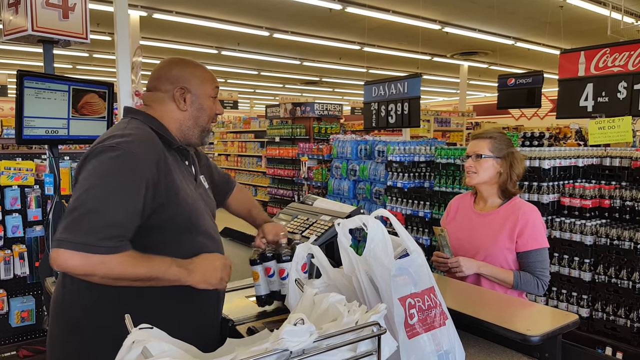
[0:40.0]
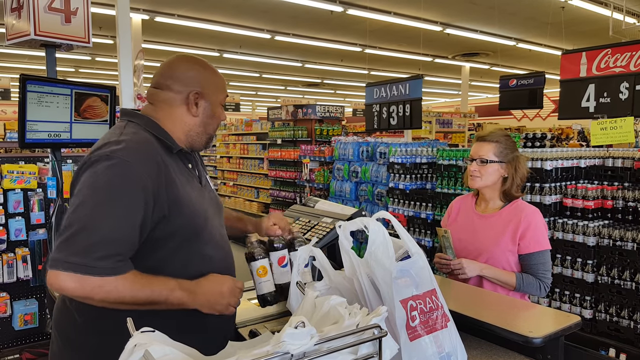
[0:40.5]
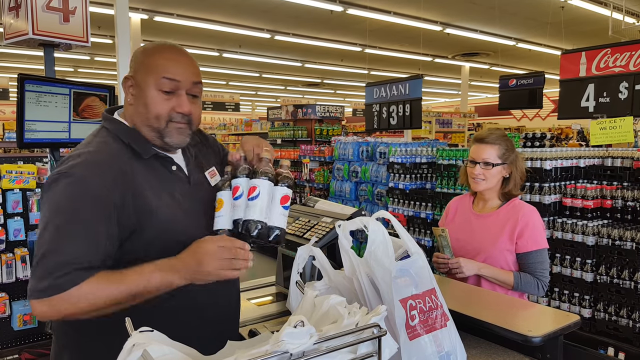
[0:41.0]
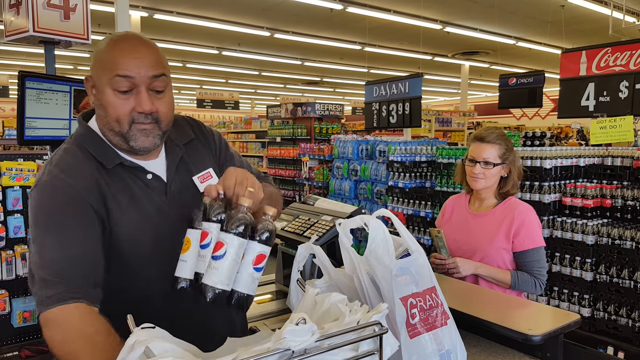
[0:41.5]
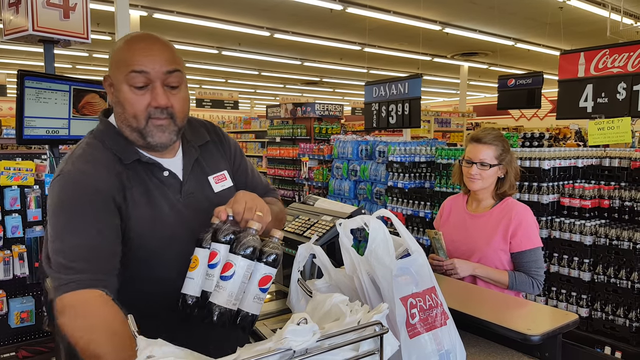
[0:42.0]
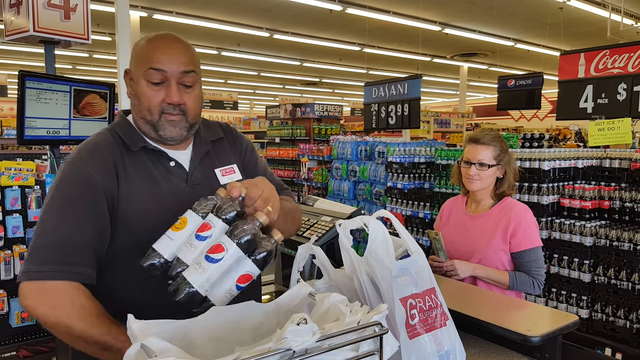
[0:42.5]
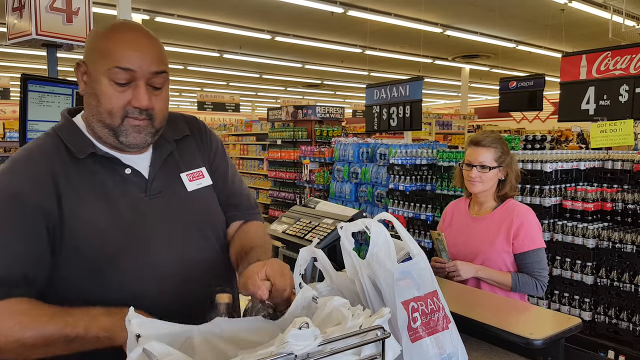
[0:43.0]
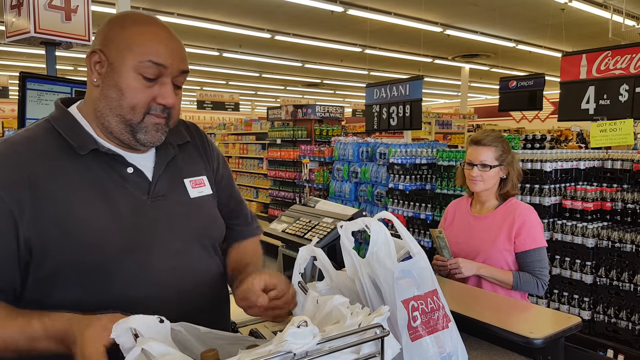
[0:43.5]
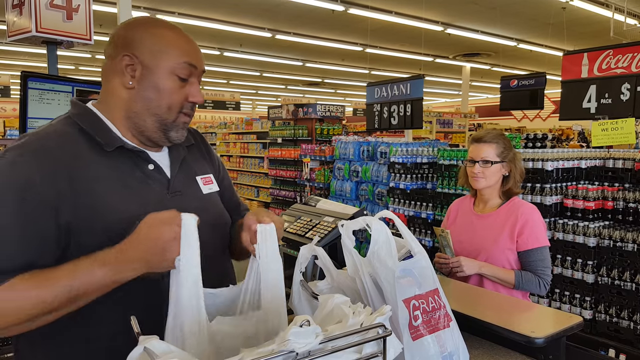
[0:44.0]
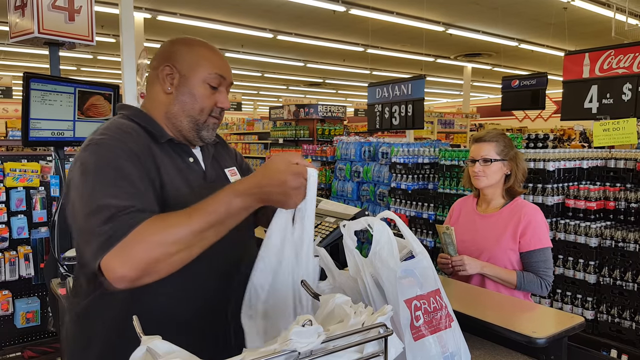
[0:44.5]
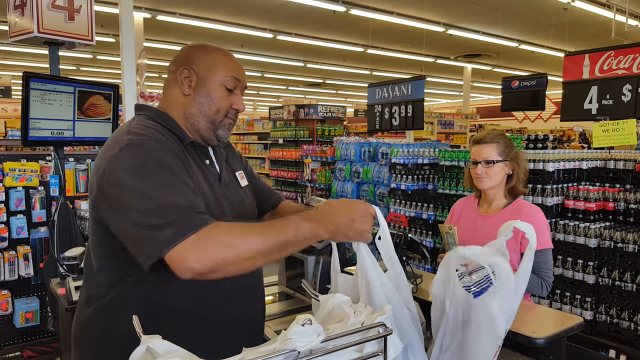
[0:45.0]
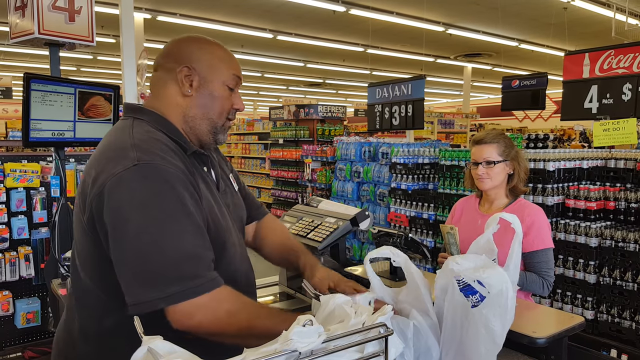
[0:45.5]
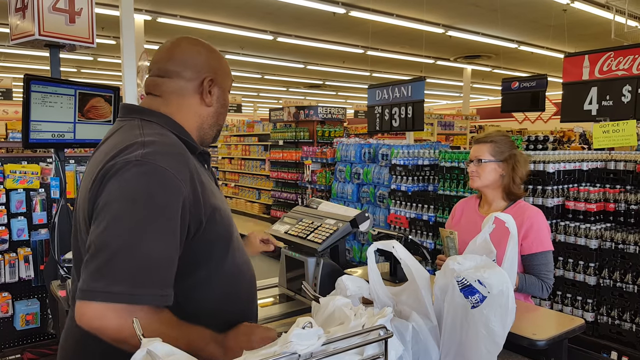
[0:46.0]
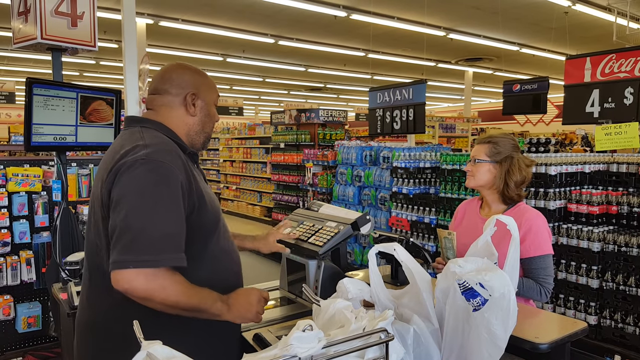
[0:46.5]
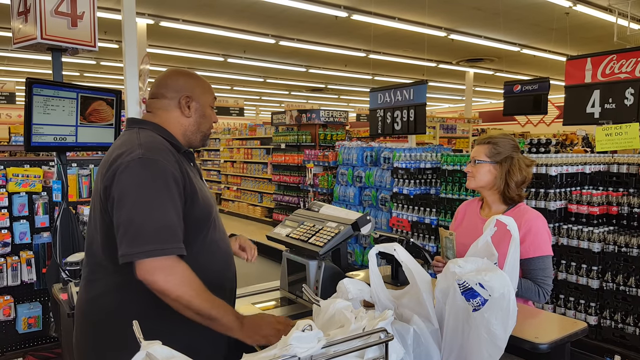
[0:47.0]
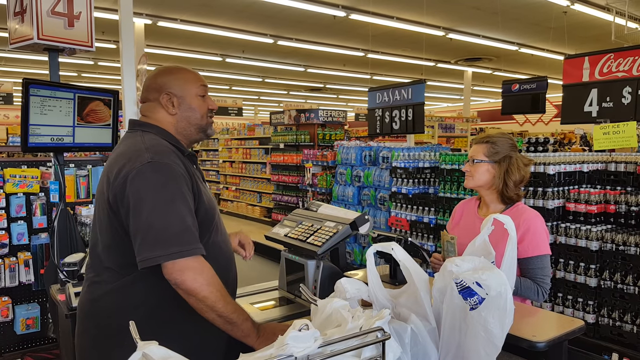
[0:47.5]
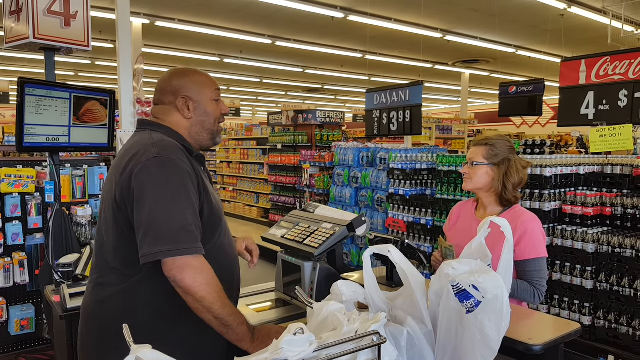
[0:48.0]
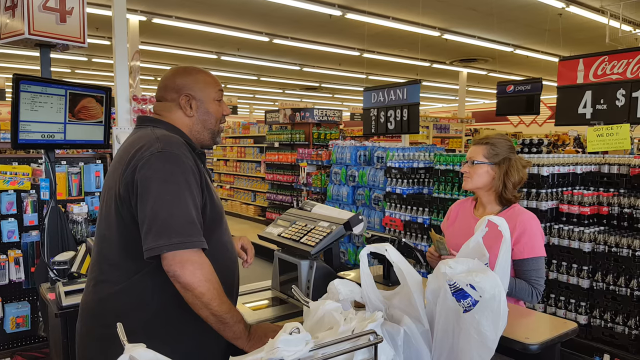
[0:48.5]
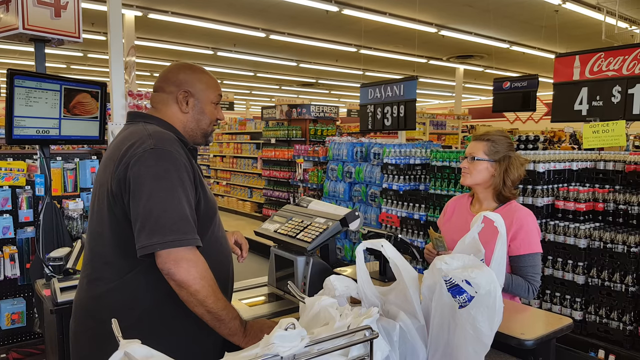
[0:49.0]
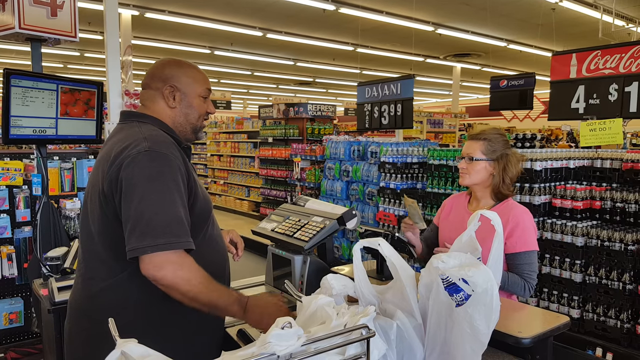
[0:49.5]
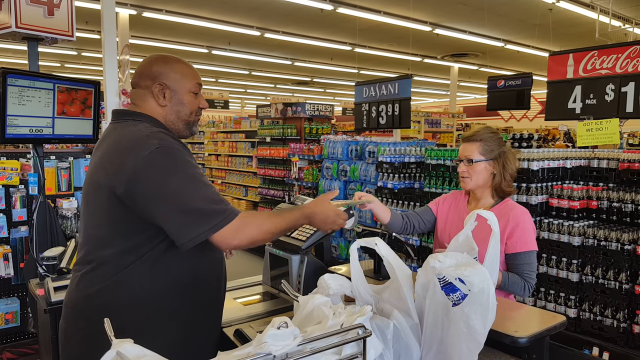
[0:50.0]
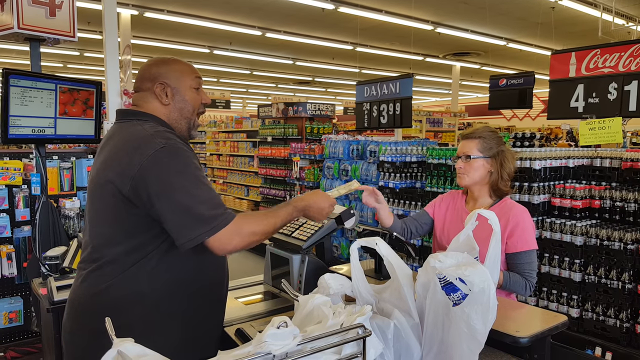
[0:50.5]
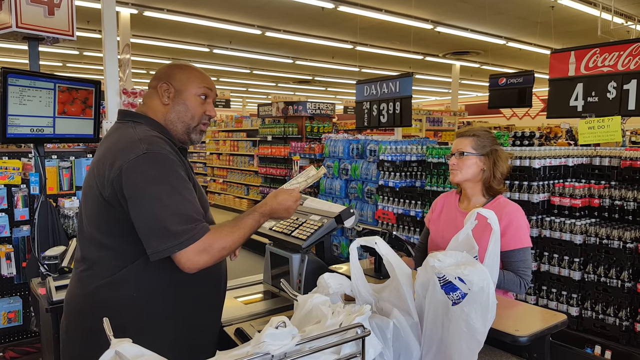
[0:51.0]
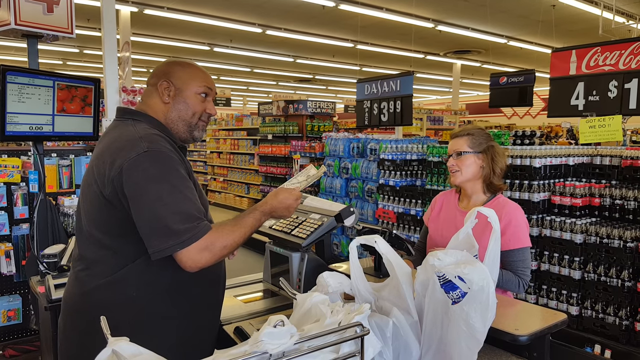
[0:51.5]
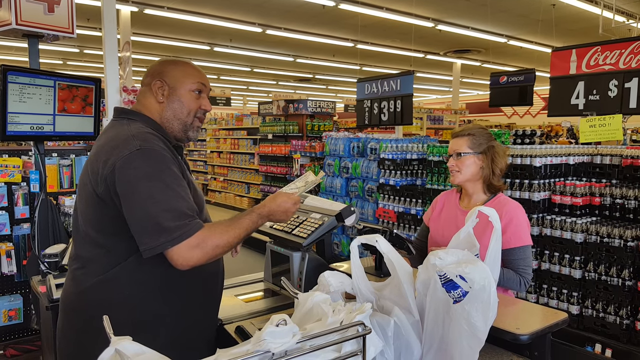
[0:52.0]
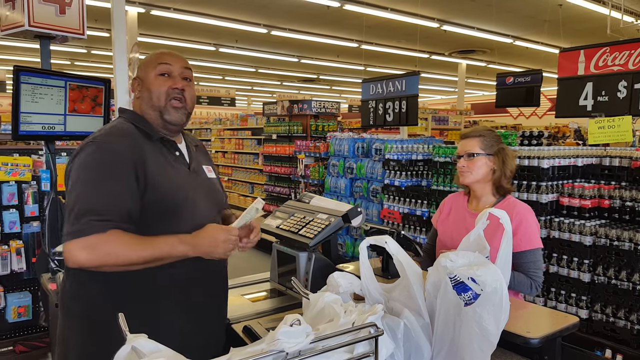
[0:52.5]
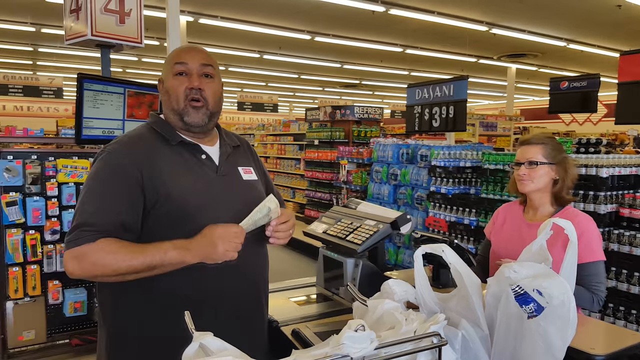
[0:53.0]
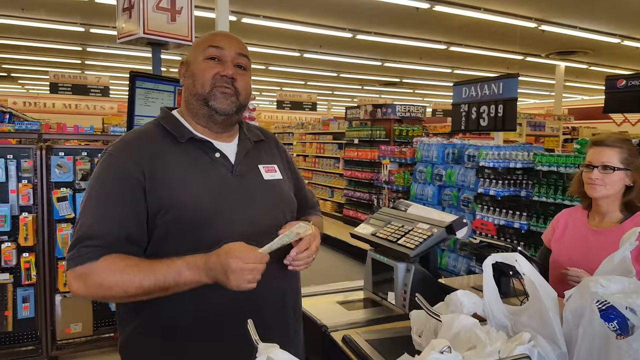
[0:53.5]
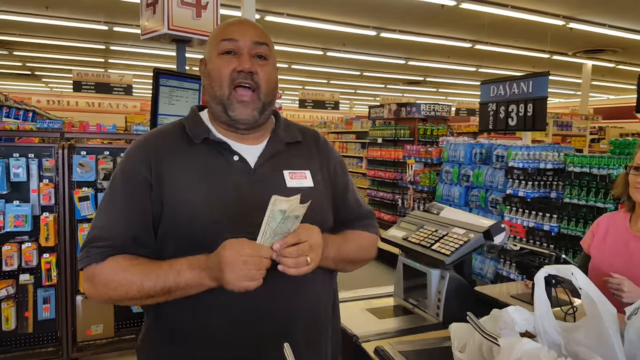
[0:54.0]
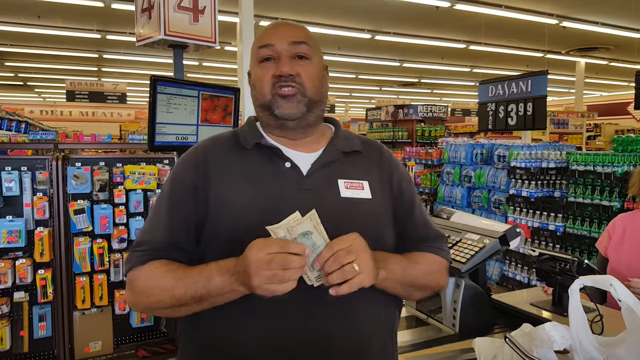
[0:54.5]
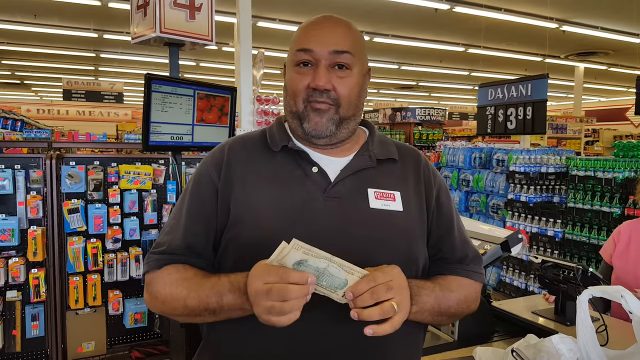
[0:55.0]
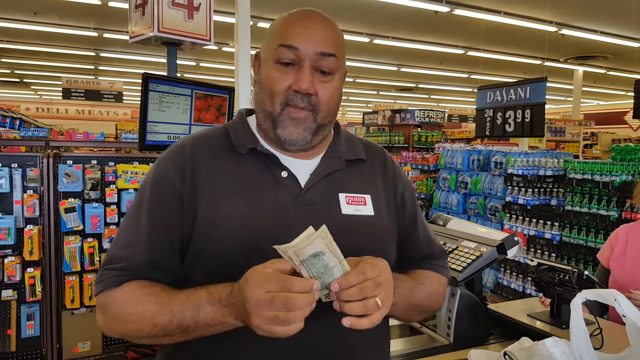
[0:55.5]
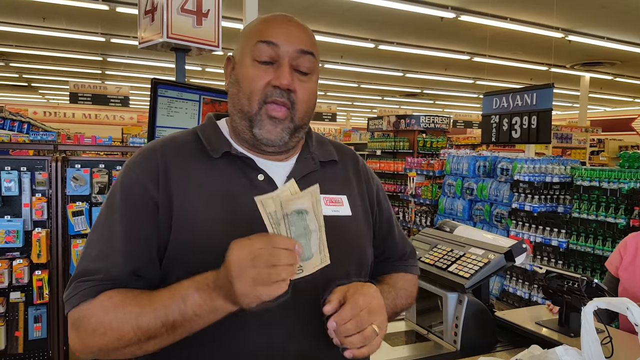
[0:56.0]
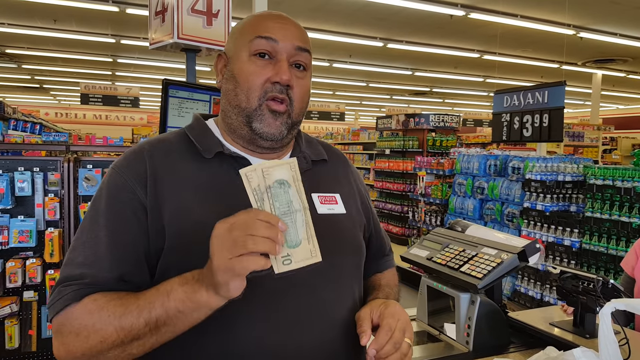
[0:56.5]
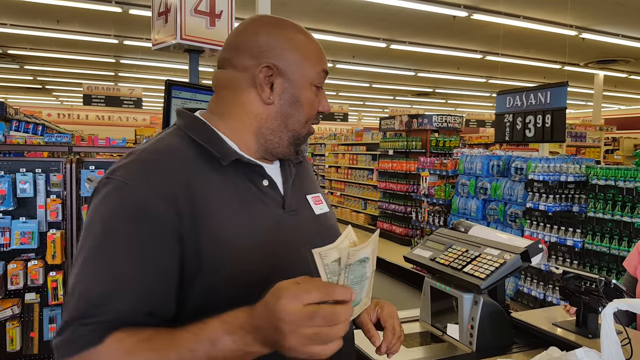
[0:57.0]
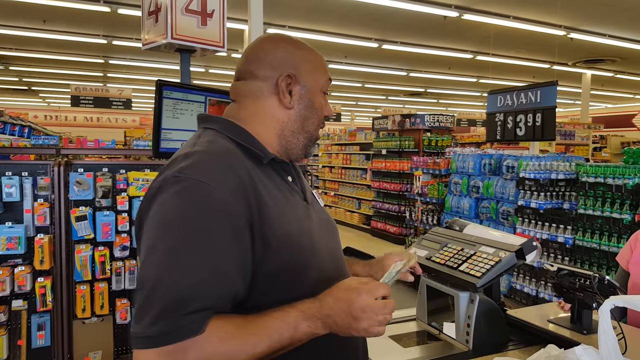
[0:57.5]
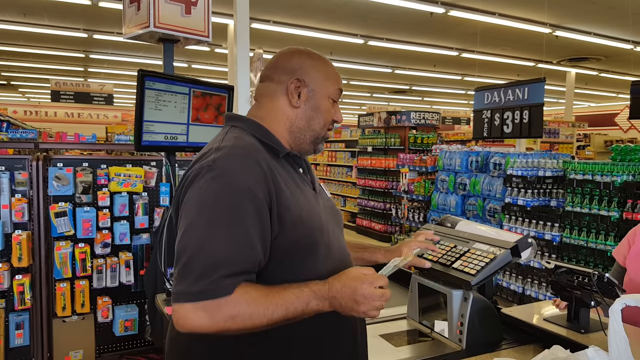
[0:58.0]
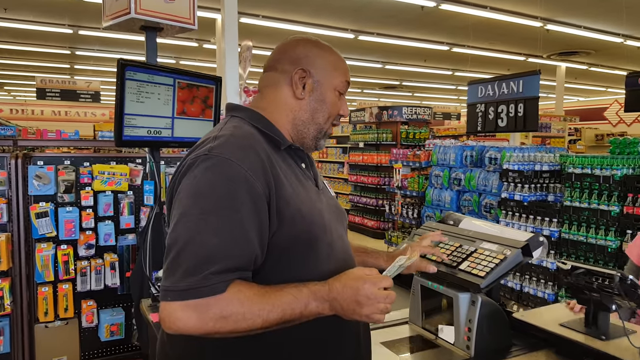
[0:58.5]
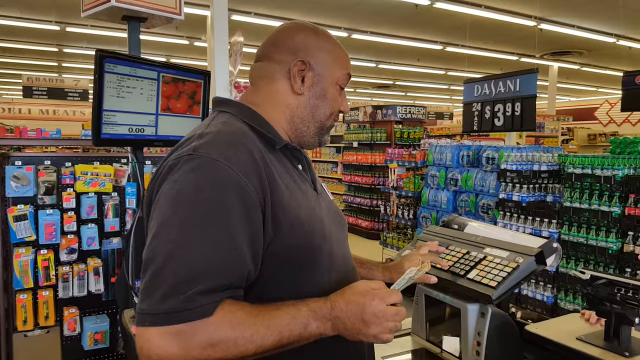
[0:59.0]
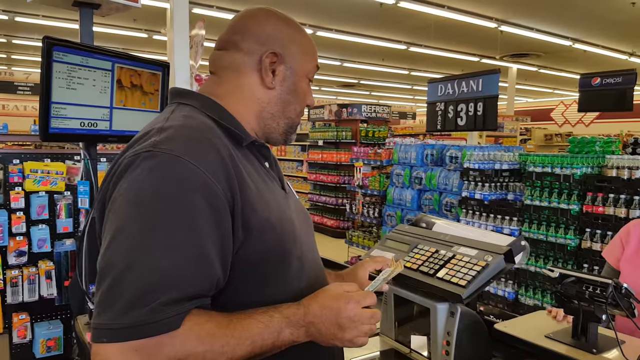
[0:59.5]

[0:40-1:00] The man scans the six-pack of Diet Pepsi and puts it into a plastic bag. The plastic bags are set up to his right. He pulls the bag out and places it to the side; he seems to put just one item in each bag rather than several items in one bag. After bagging the final item, he talks to the woman and accepts her money, two $10 bills. He looks back toward her, and the camera zooms in close to him as he explains something, holding the money out in front of him. He then turns back and presses some keys on the keyboard next to him, above the scanner.